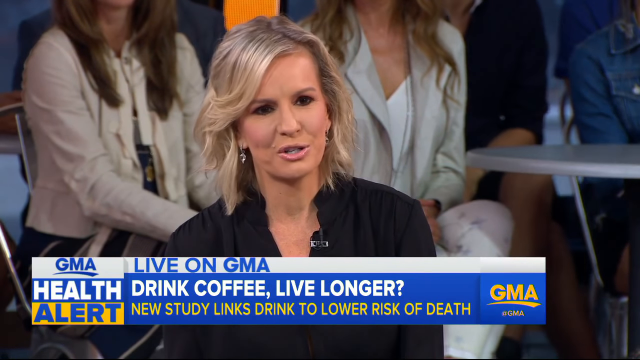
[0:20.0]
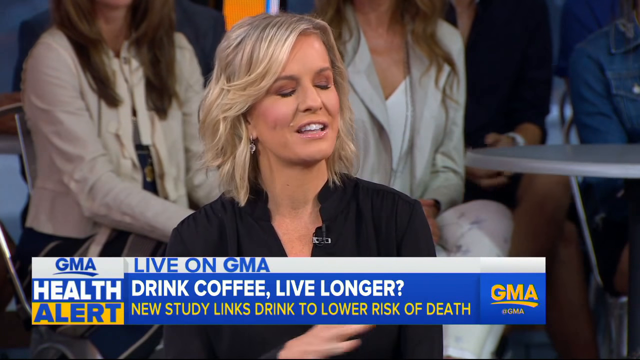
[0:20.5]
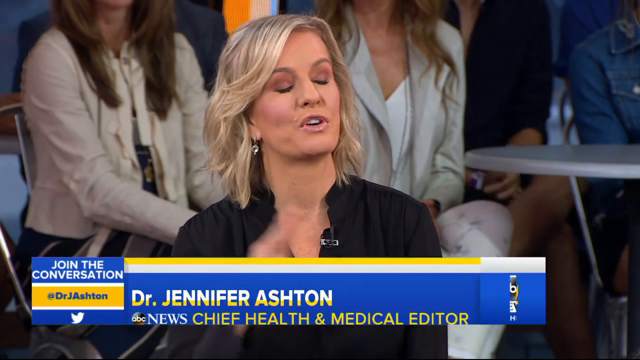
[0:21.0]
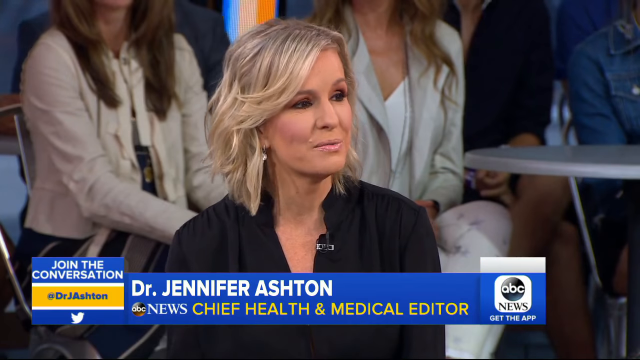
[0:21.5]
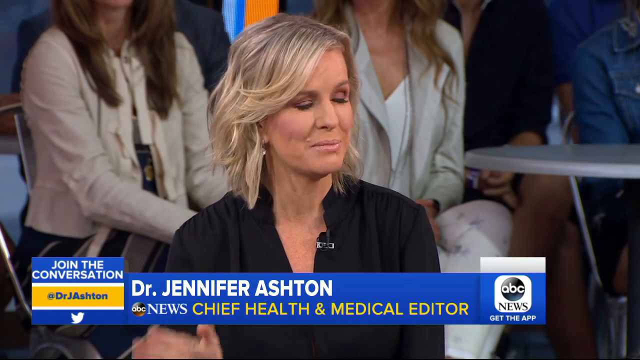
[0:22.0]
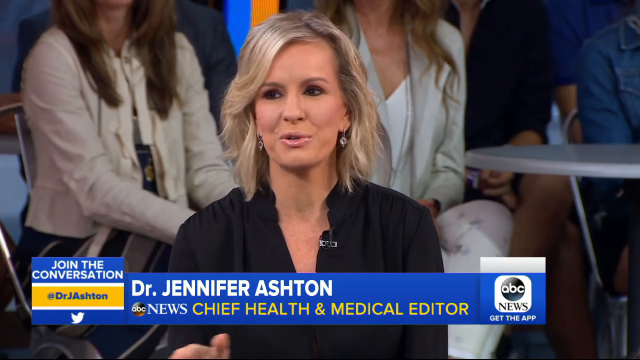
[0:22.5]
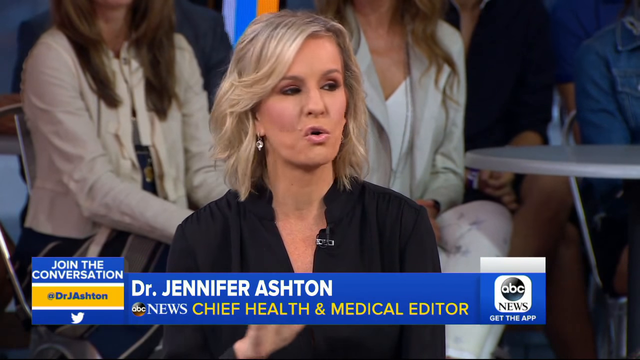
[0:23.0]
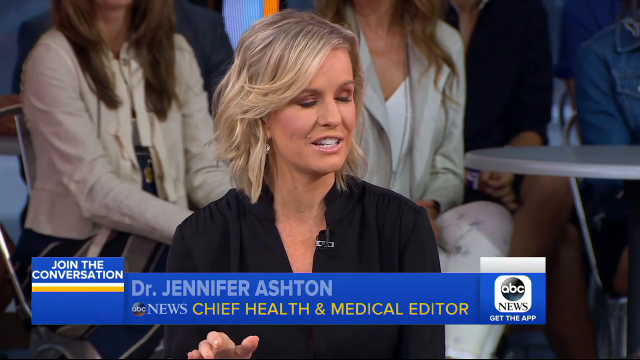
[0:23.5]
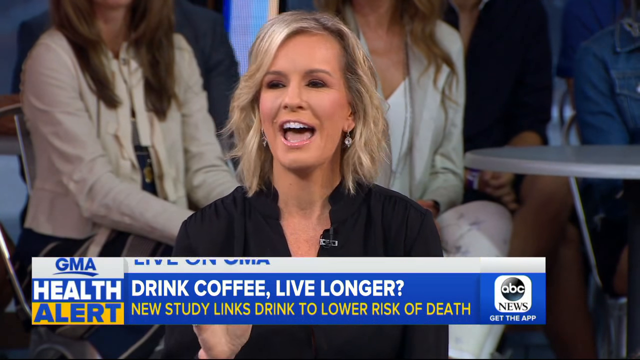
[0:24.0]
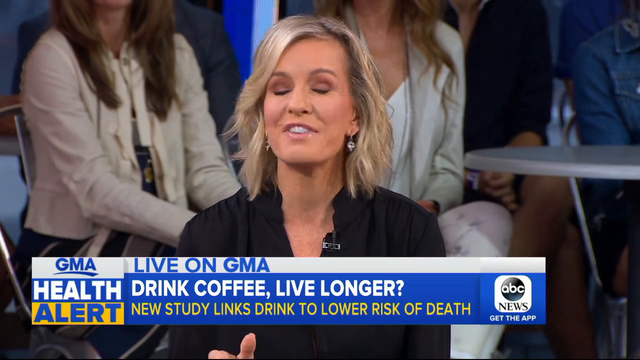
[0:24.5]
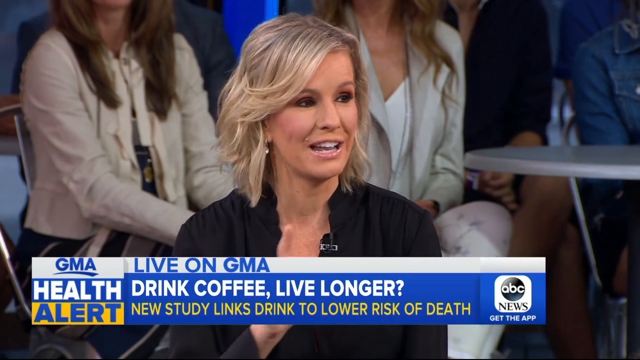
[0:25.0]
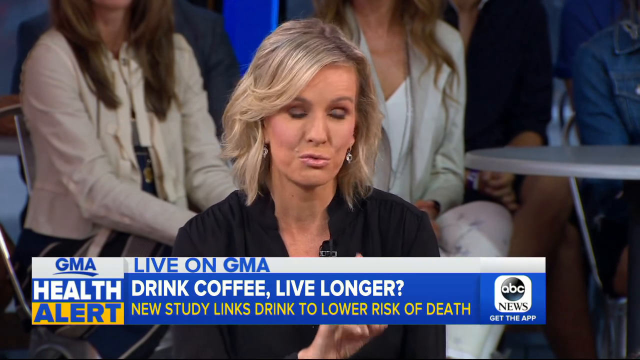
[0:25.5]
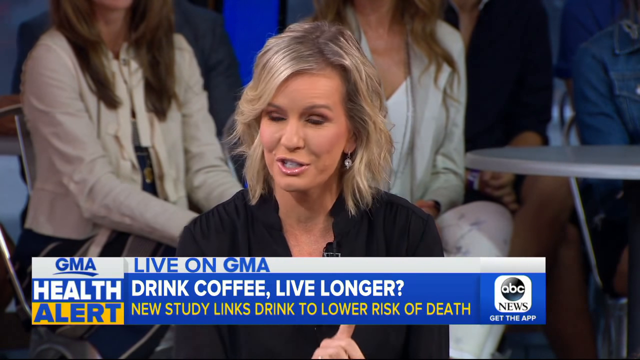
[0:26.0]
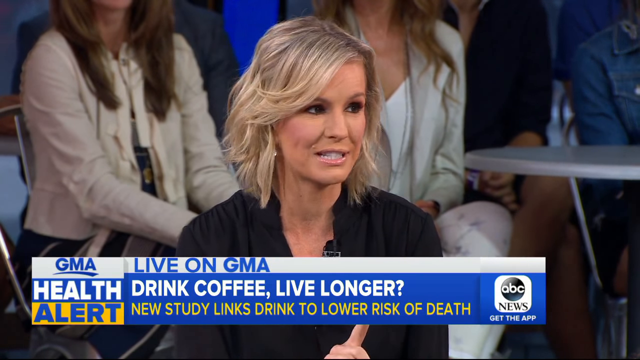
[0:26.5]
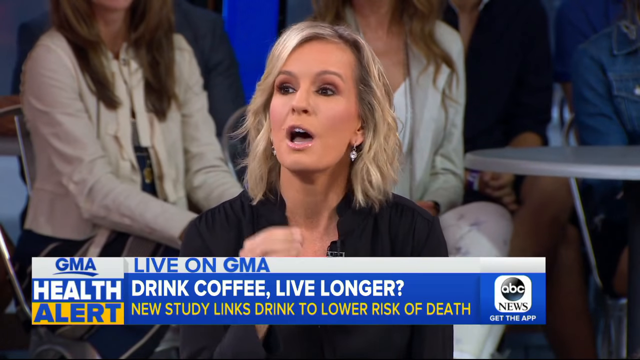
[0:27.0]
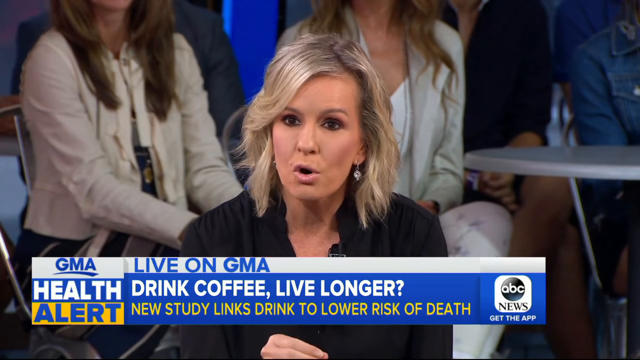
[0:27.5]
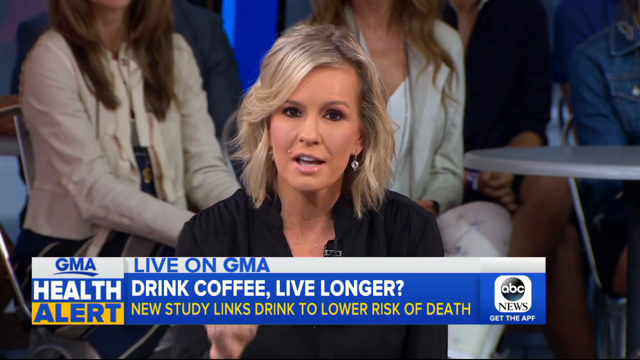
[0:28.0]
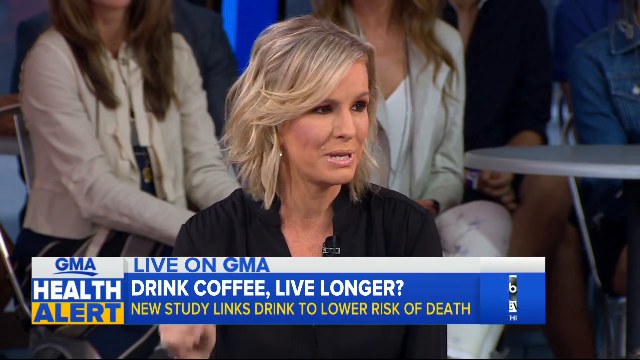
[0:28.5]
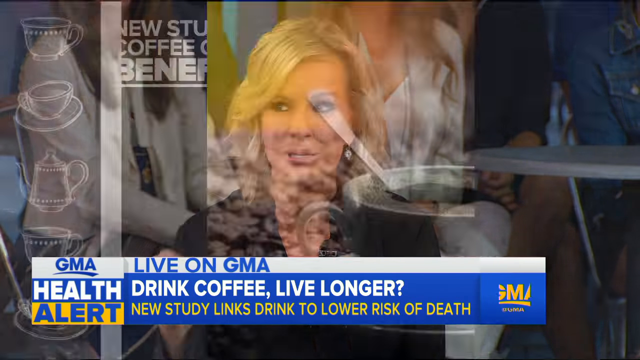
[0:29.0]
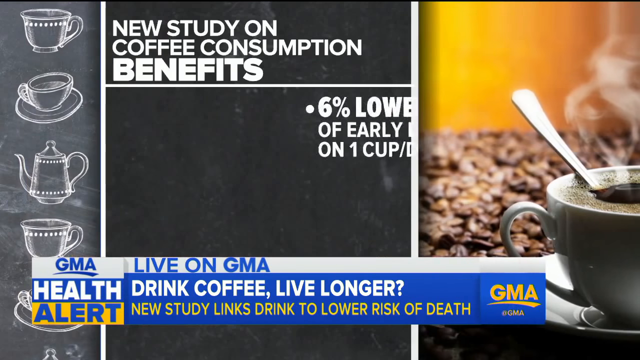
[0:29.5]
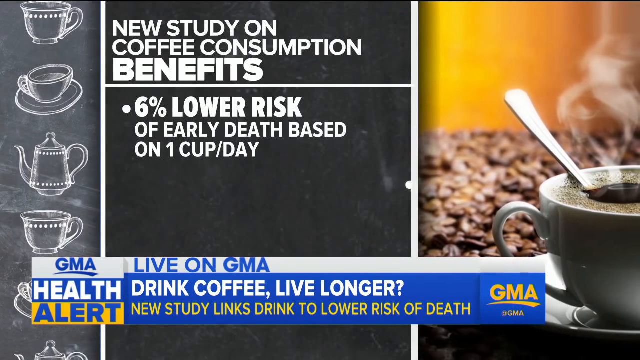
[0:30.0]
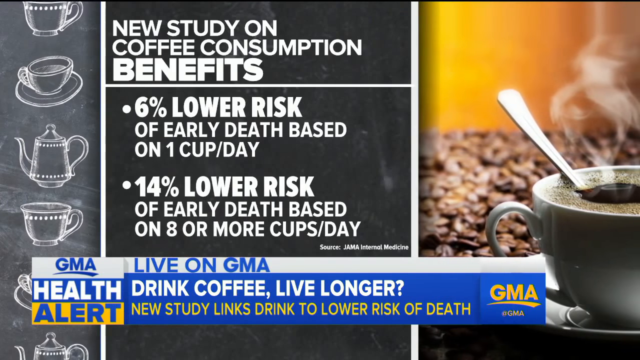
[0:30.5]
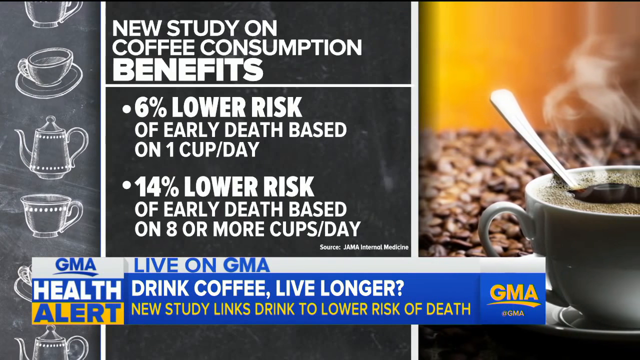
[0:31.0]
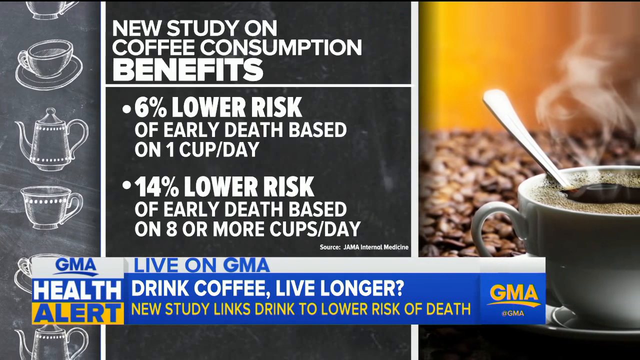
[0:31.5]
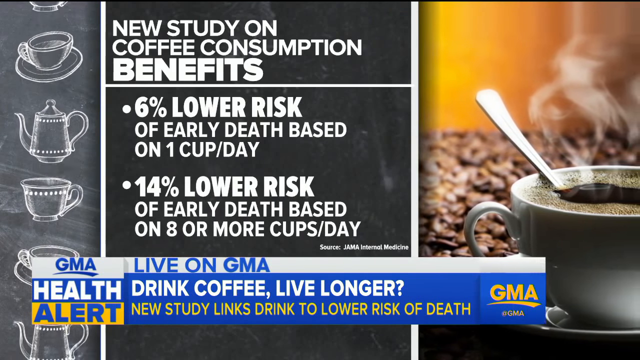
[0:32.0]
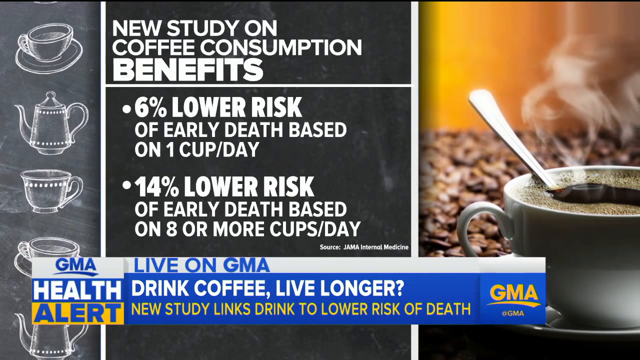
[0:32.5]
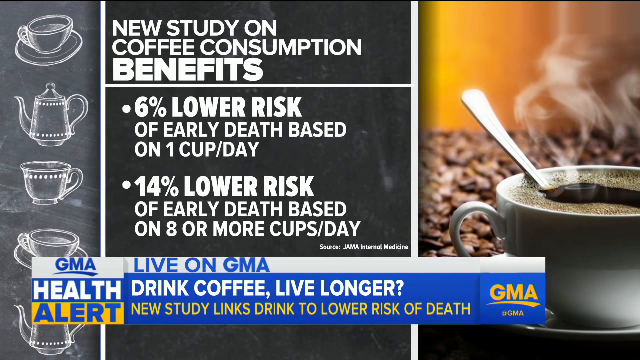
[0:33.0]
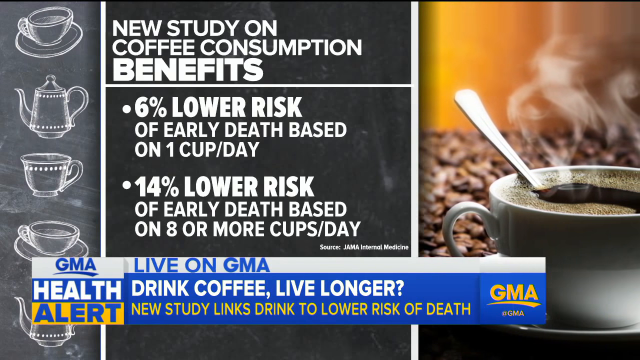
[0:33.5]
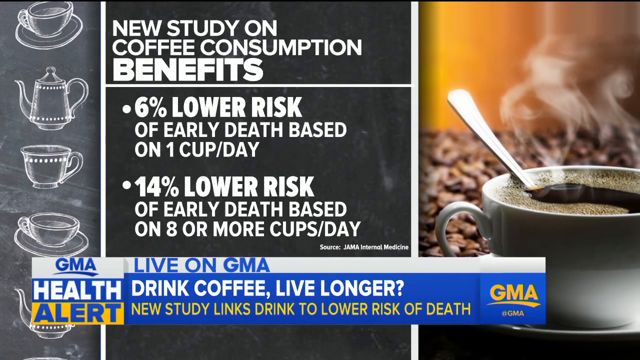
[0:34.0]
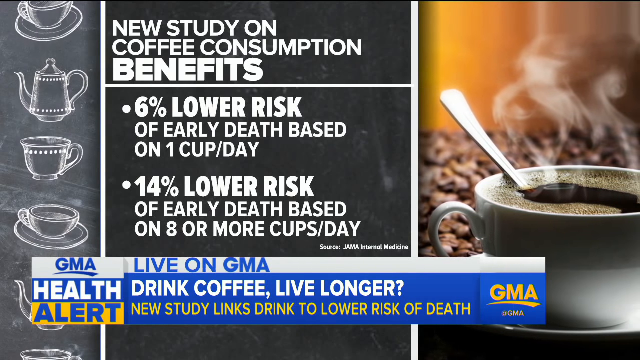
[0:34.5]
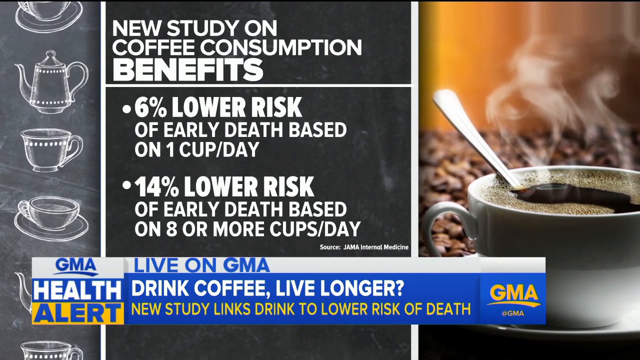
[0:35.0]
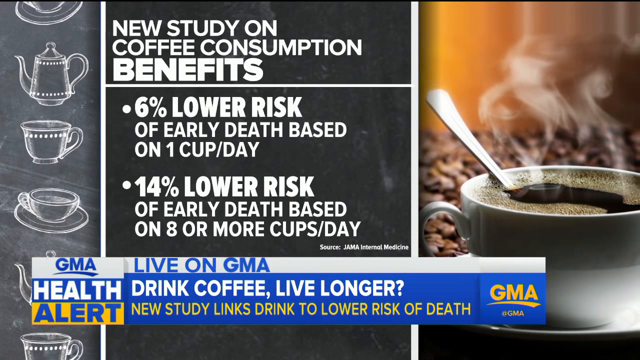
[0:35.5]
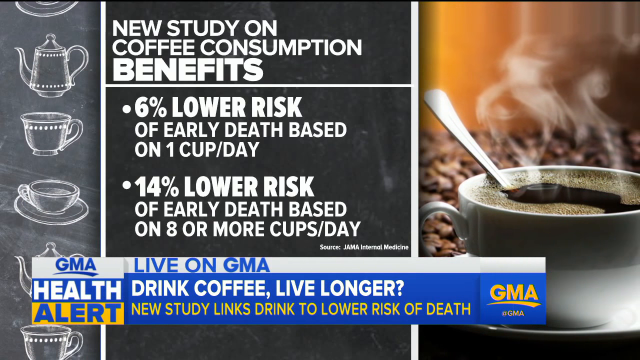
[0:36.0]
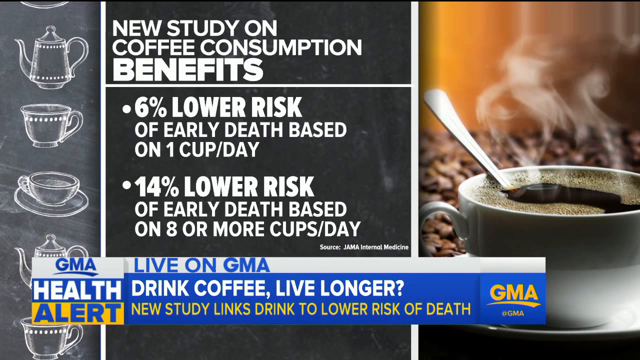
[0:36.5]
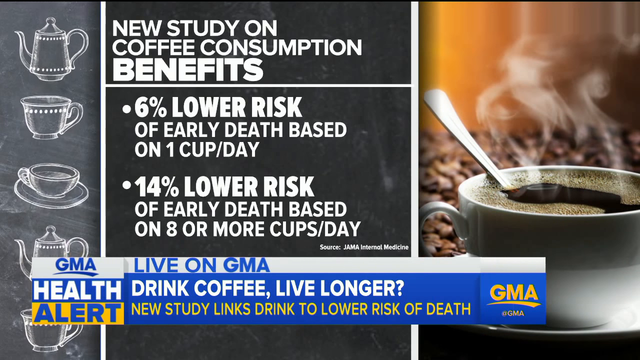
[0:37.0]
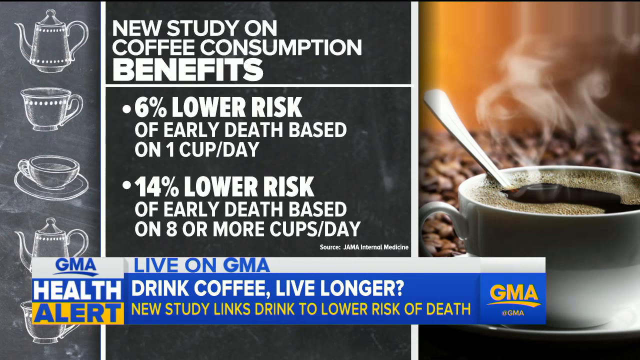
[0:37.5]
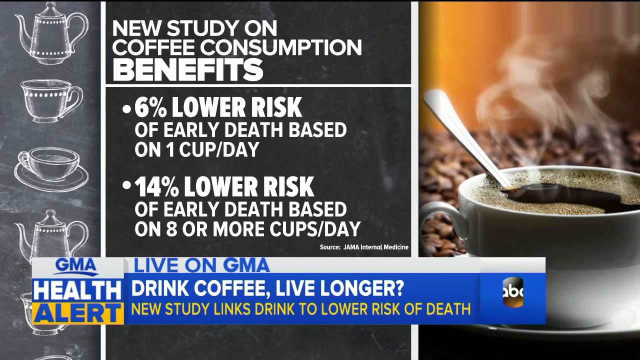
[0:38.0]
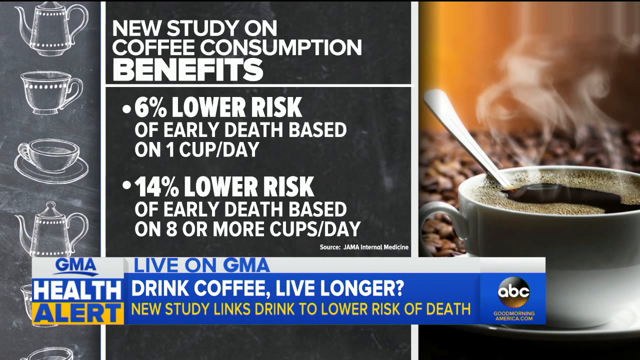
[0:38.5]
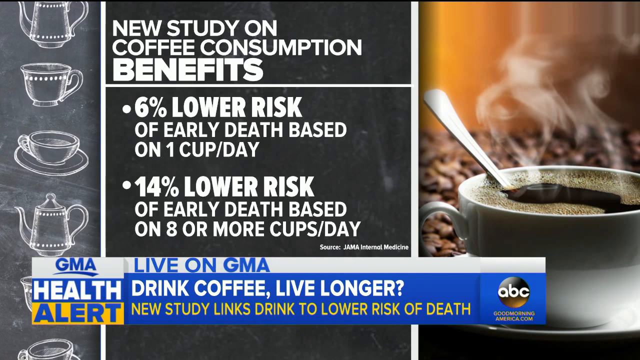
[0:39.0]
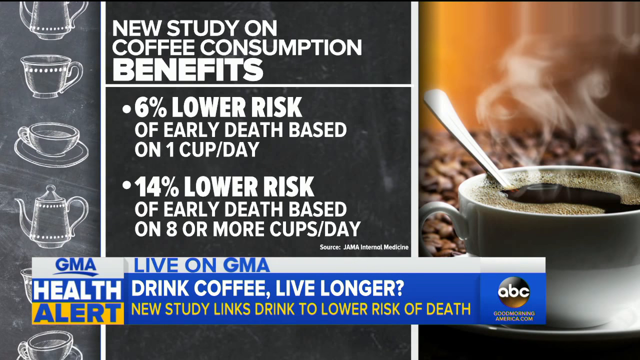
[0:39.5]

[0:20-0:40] The woman in the black top with white hair is Dr. Jennifer Ashton, news chief health and medical editor. She and the presenter talk to each other, using their hands to demonstrate what is being said. A new screen appears with coffee and various drawings of coffee and cups, including a grey cup holding hot black coffee with a spoon inside. White text on a black background reads "new study on coffee consumption benefits", stating "six percent lower risk of early death" for one cup per day and "14 percent lower rates of early death" for eight or more cups per day. The drawings move up and down.